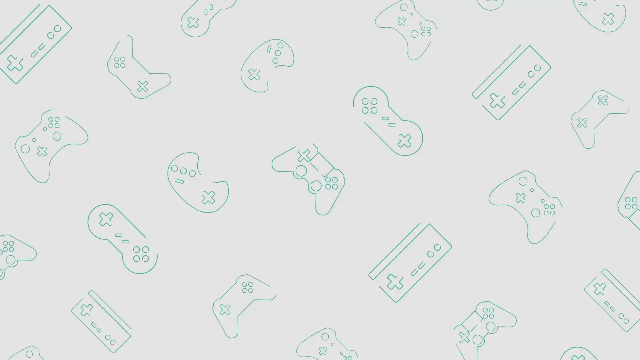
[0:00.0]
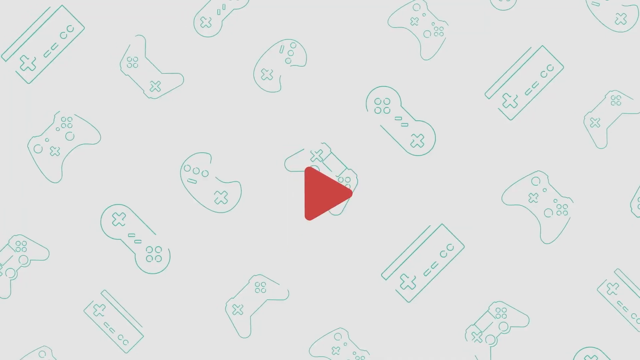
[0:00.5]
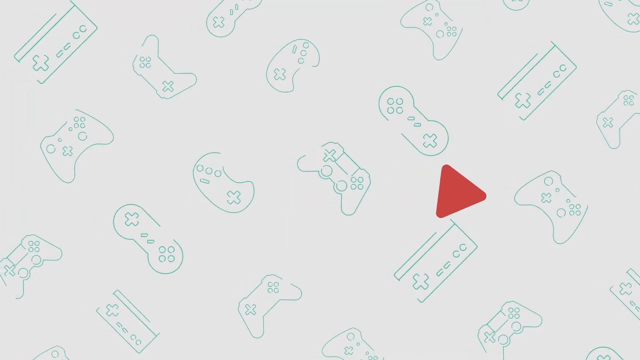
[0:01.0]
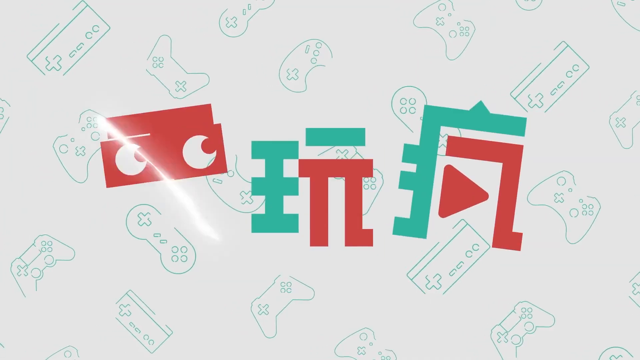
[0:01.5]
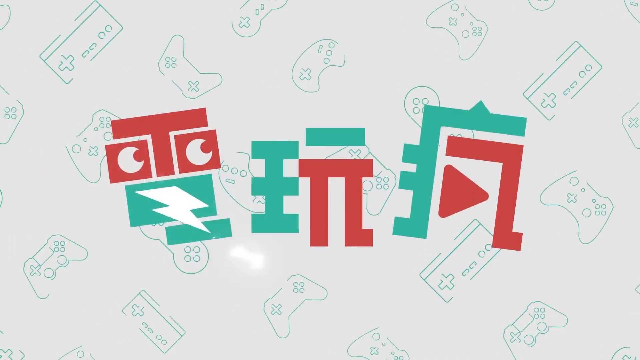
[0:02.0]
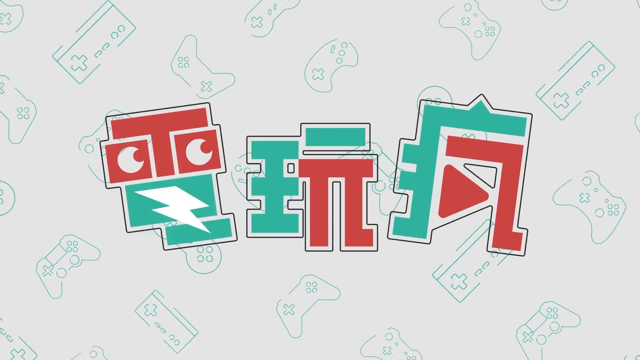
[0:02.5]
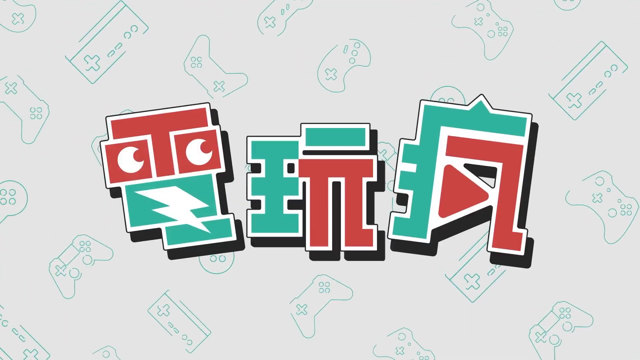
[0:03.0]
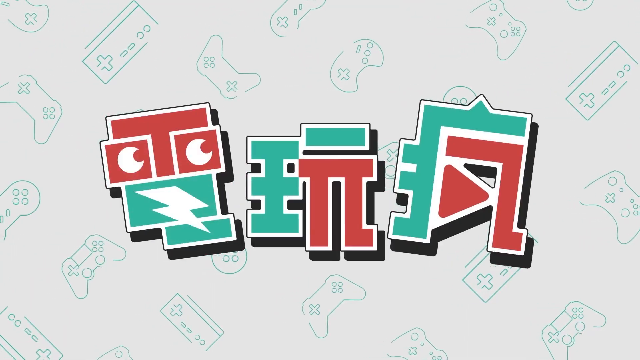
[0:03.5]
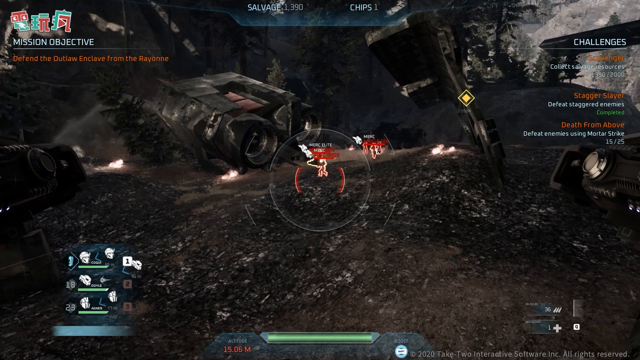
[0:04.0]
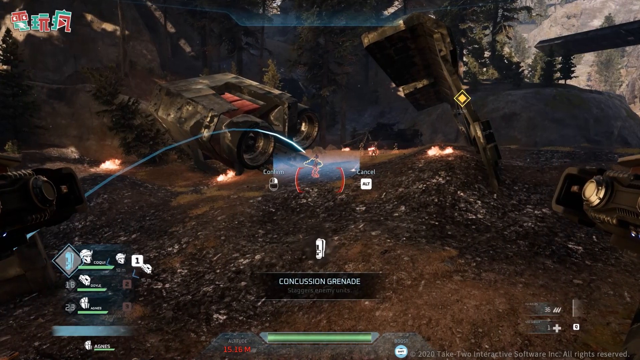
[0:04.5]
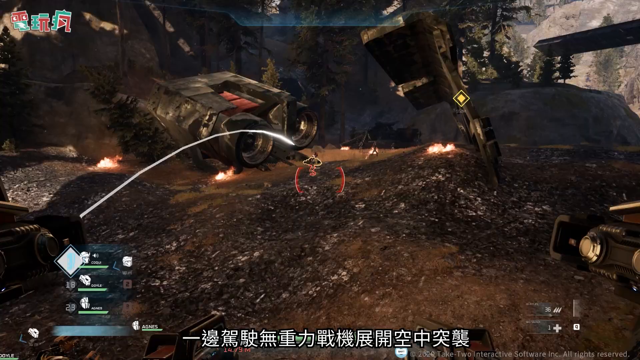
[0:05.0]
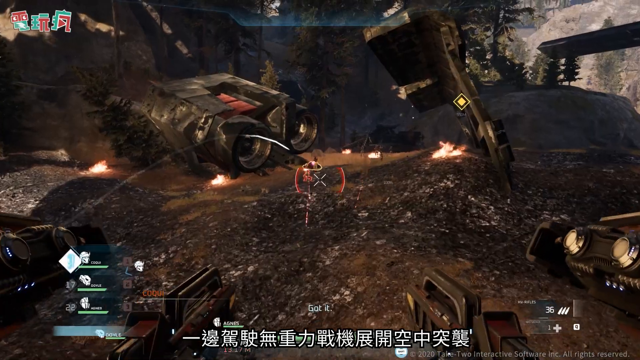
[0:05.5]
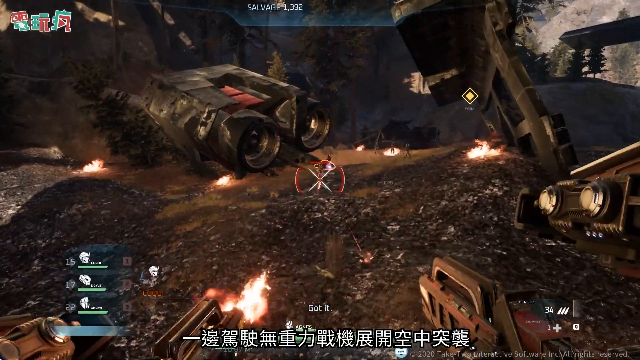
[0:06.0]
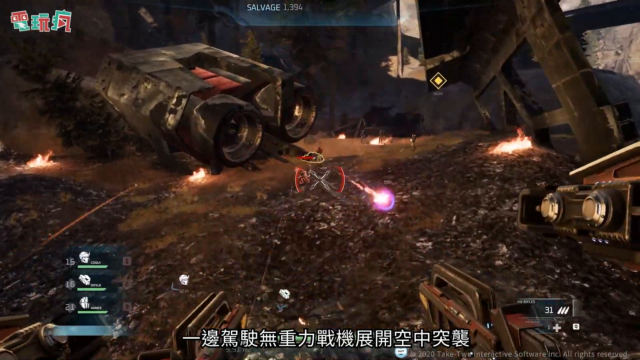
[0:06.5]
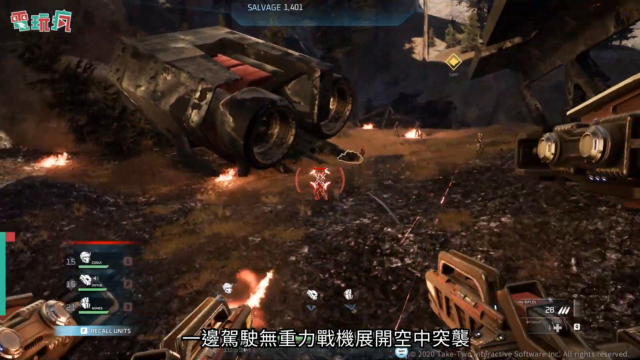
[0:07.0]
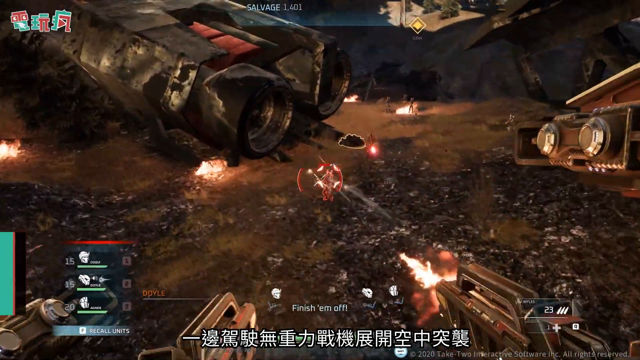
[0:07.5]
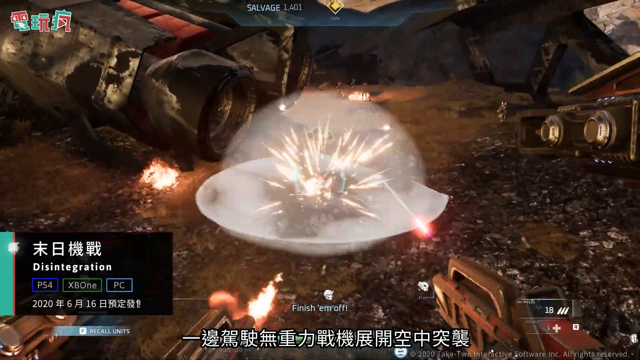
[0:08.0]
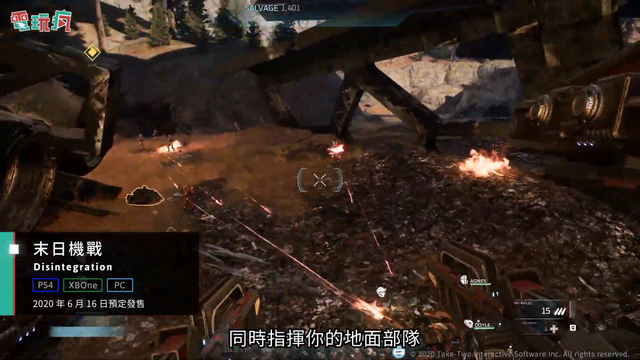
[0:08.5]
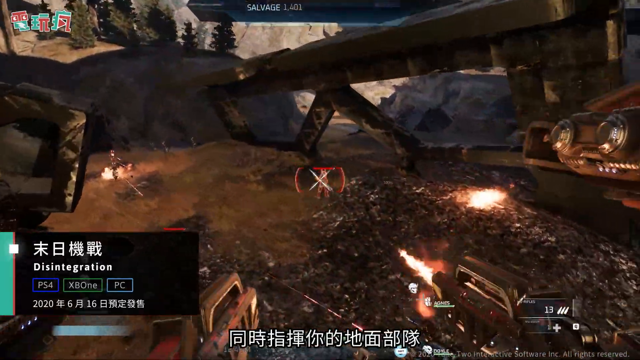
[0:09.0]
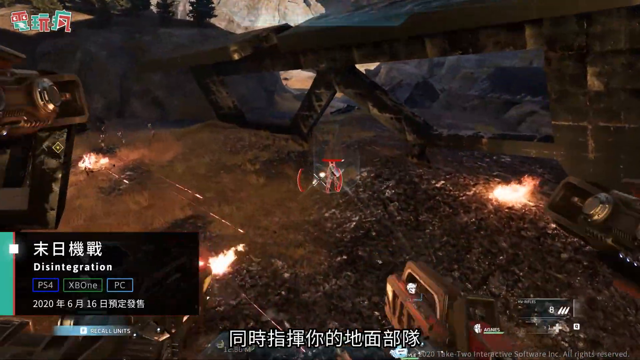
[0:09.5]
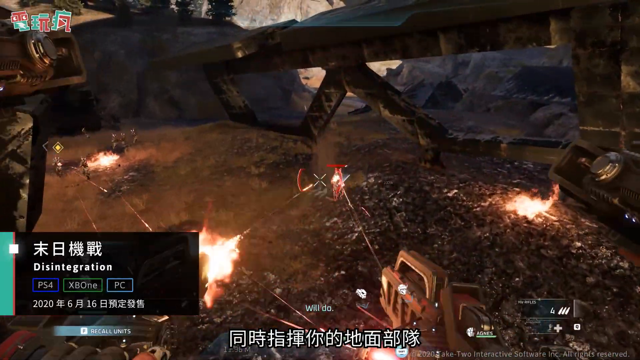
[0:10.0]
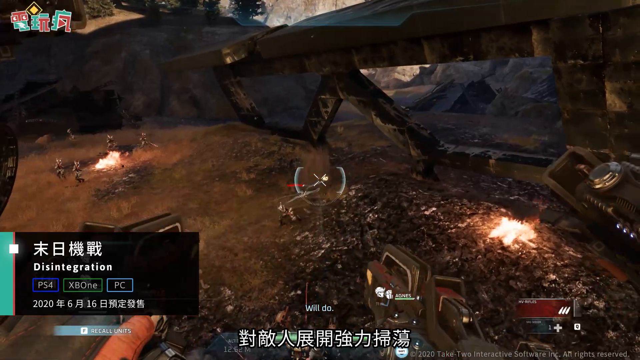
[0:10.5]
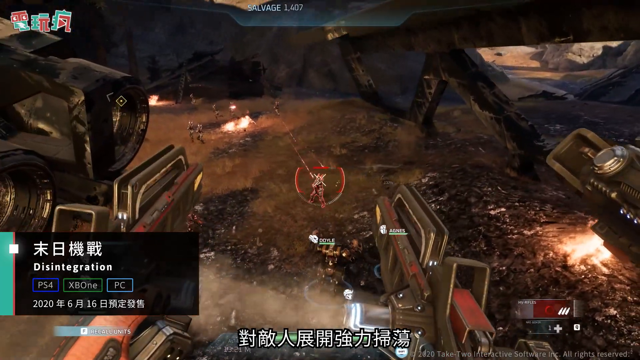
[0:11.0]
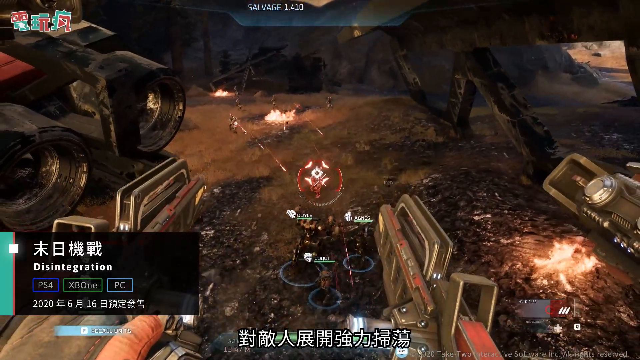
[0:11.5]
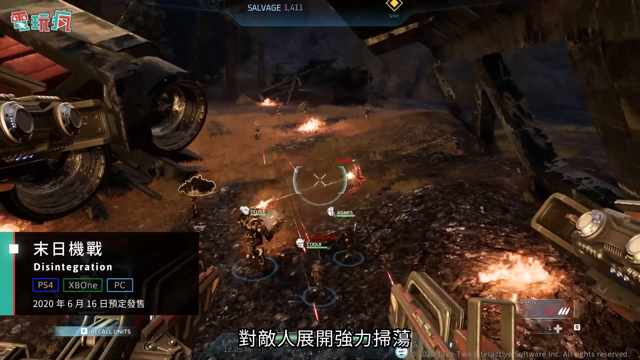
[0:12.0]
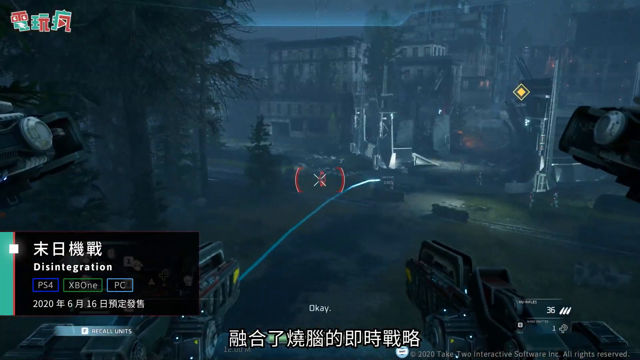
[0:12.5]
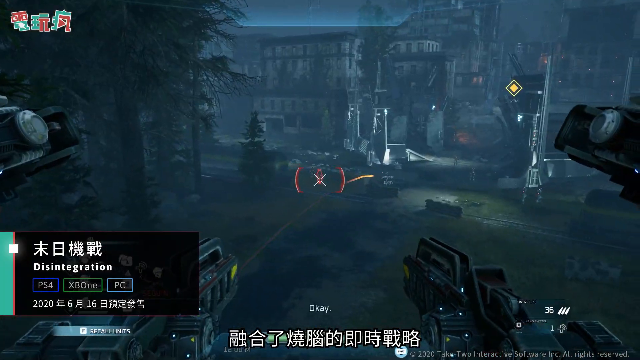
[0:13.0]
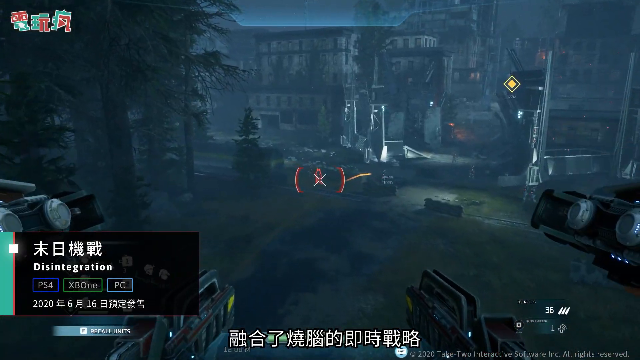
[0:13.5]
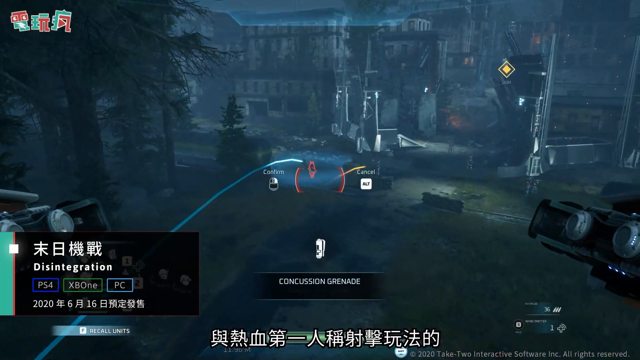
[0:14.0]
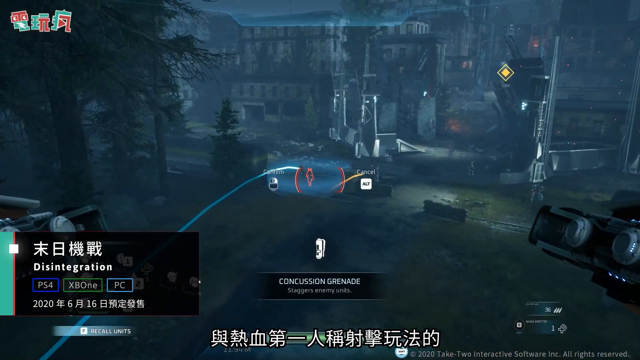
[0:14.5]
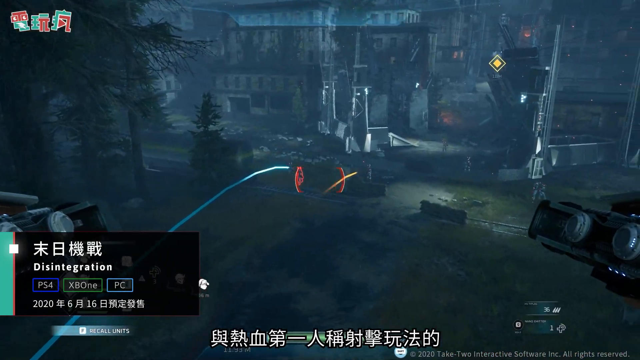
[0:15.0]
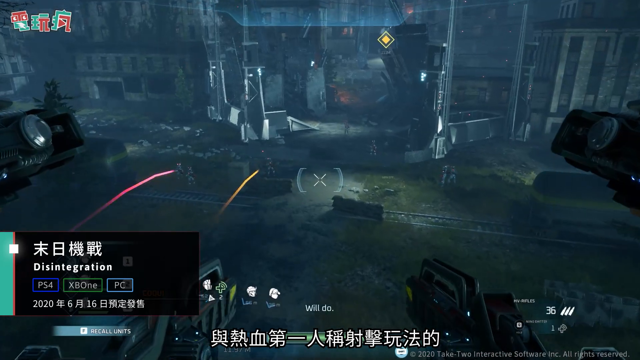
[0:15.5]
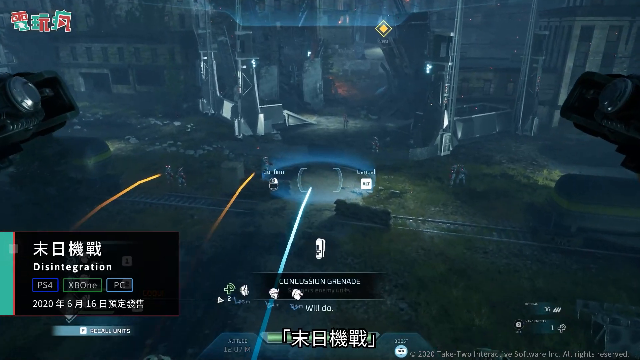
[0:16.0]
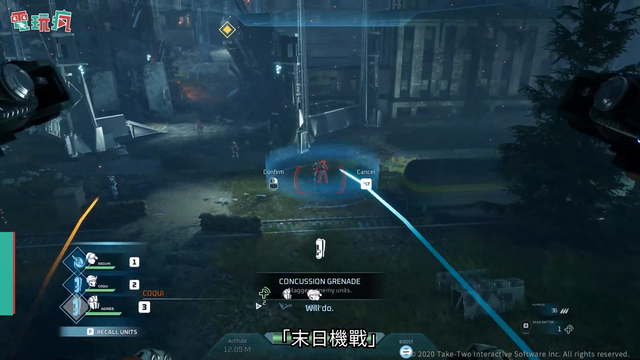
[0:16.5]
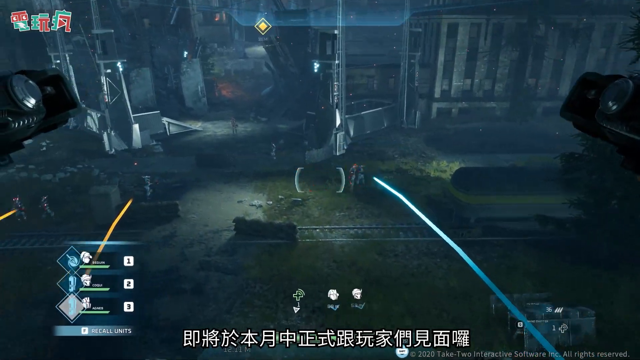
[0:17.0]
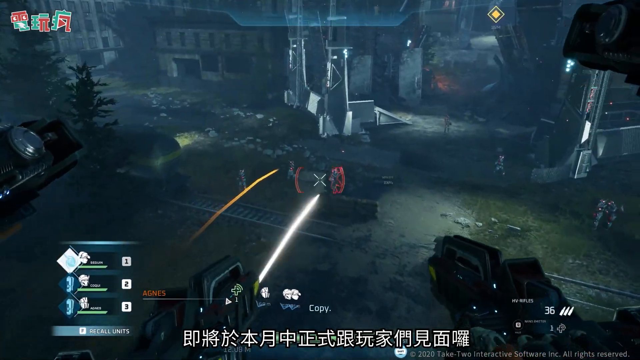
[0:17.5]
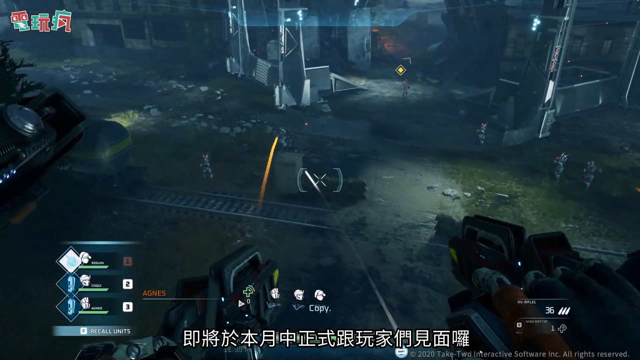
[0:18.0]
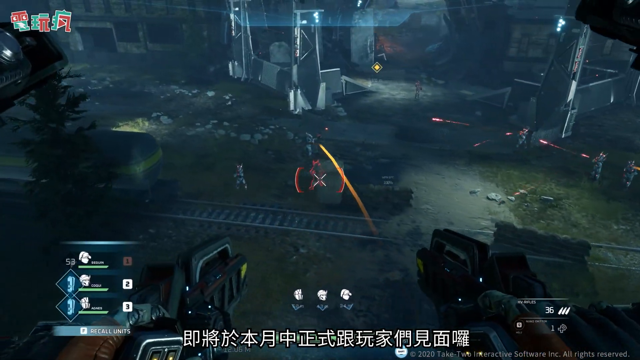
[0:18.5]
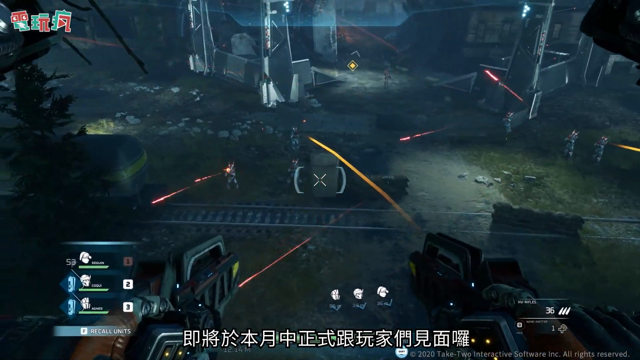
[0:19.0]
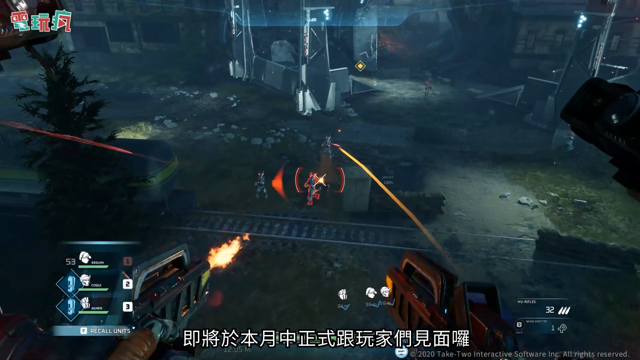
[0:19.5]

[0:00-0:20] The video opens on a white screen with green-outlined versions of various controllers, including the old Nintendo and PlayStation and others. In the middle of this background a red triangle pops up, pointing toward the right, and it evolves into what appear to be several different characters drawn in green and red lines with a black outline on the outside. A black backdrop fills in as well. The scene then cuts to a video game screen. In the upper left corner it says "Mission Objective" alongside the logo from the beginning, and underneath it says "Defend the Outlaw Enclave from the Rayonne." Small crosshairs are in the center, and along the bottom are the very tops of guns that are firing. Gunshots also come from elsewhere, along with small bright lights that look like they might be little fires or something similar. The view switches to a different landscape, more like a city on a dreary, somewhat foggy night. The guns are still at the bottom of the screen and the crosshairs in the center. Many small characters appear and begin shooting at each other. This turns into a black screen with a sort of stick-figure drawing of a man and a woman; the man is on the left and is covered in red dots.